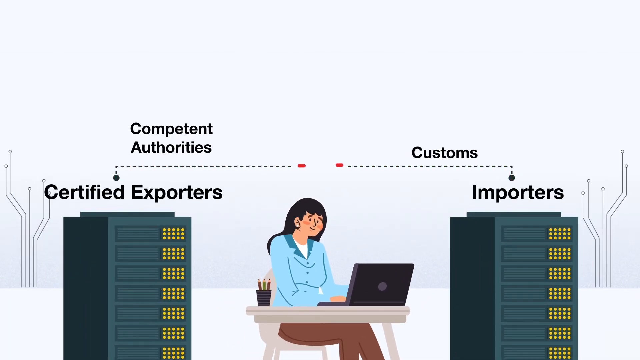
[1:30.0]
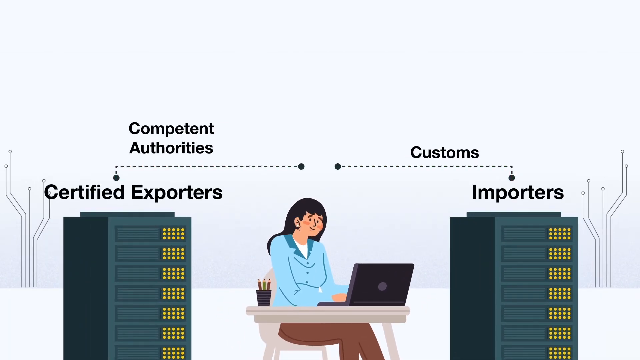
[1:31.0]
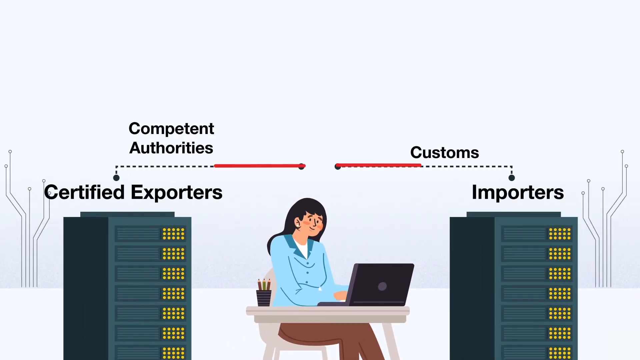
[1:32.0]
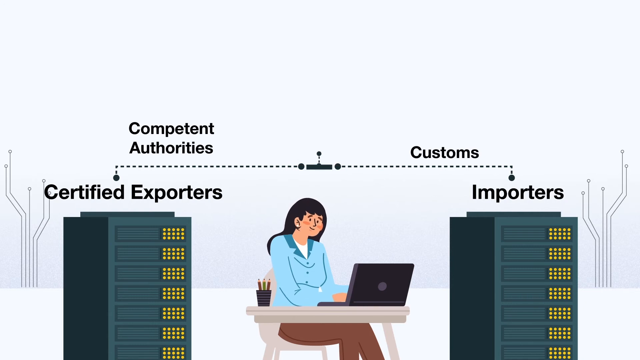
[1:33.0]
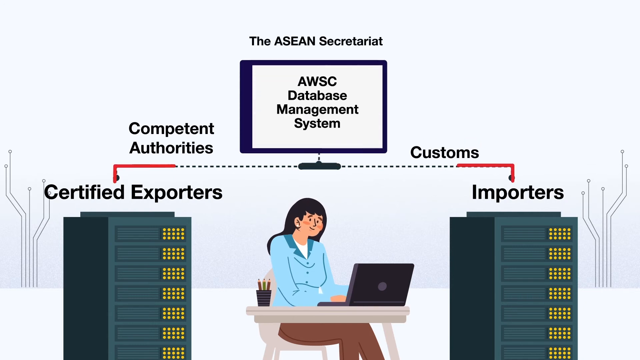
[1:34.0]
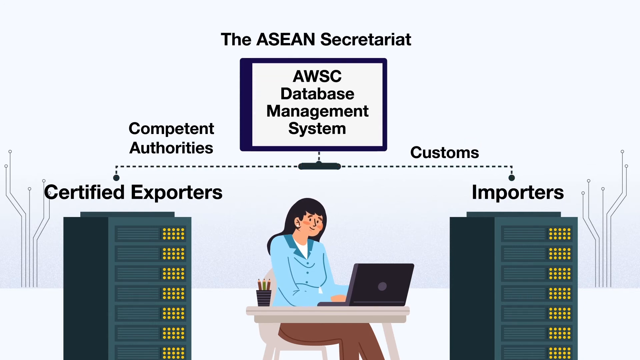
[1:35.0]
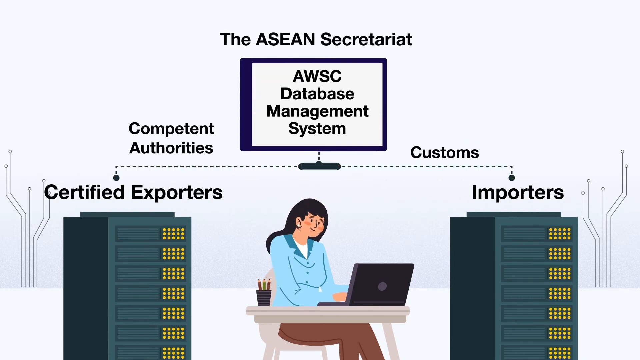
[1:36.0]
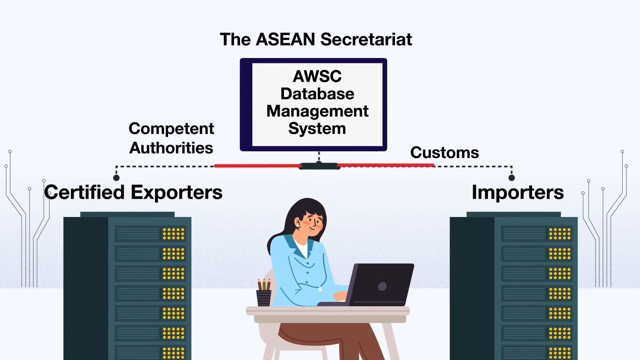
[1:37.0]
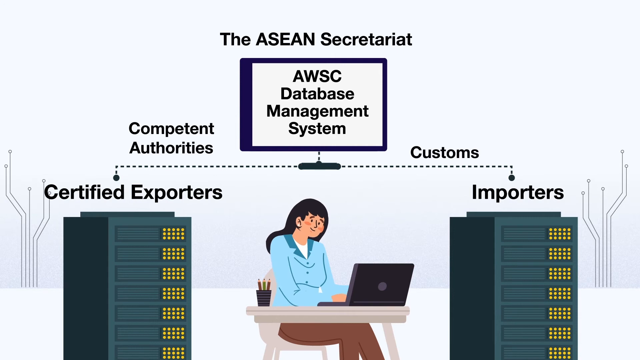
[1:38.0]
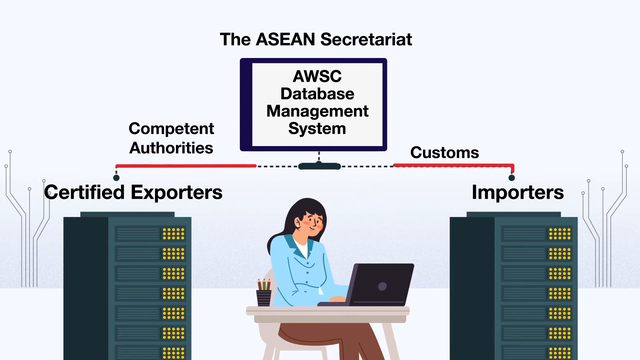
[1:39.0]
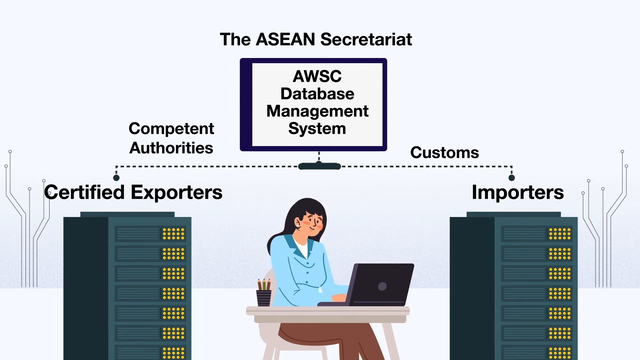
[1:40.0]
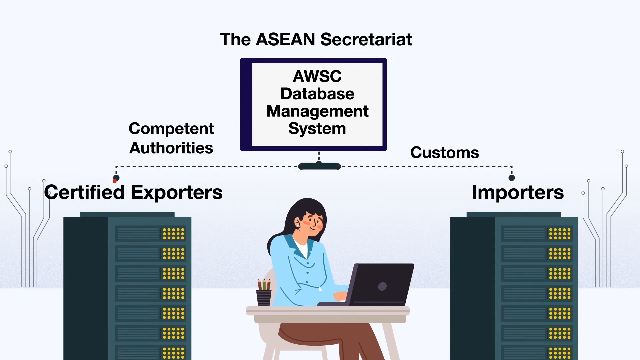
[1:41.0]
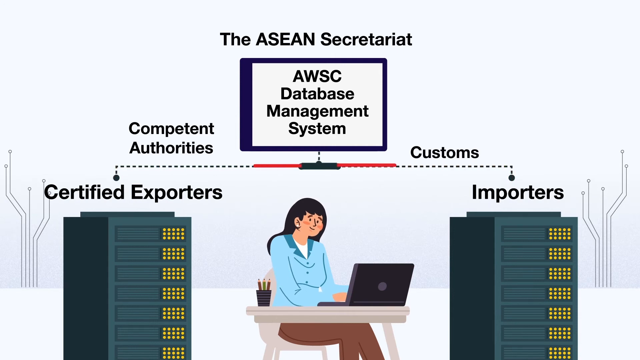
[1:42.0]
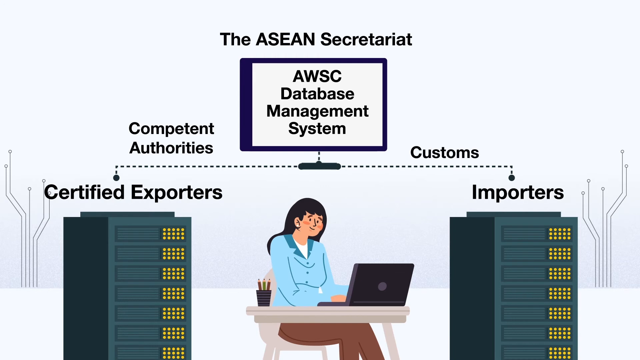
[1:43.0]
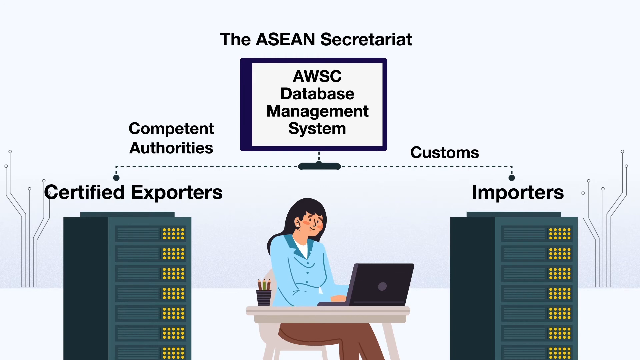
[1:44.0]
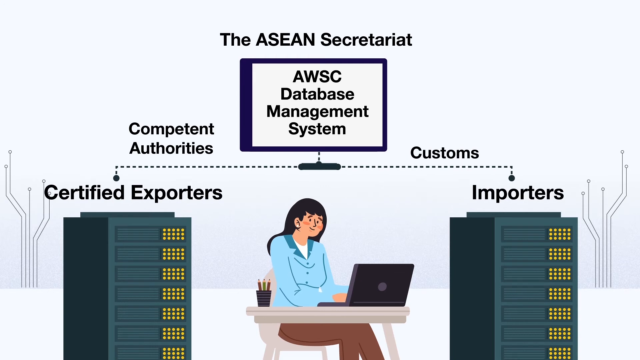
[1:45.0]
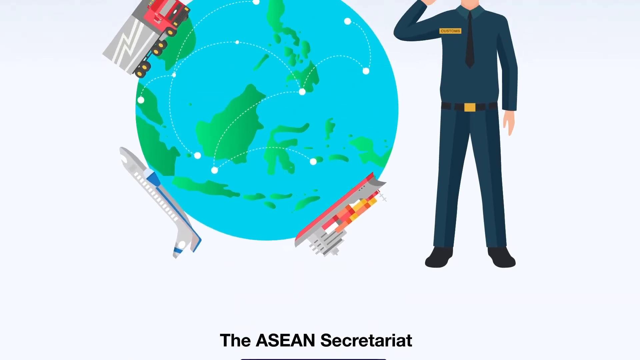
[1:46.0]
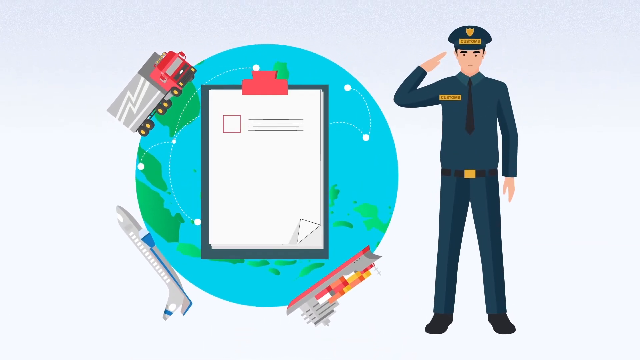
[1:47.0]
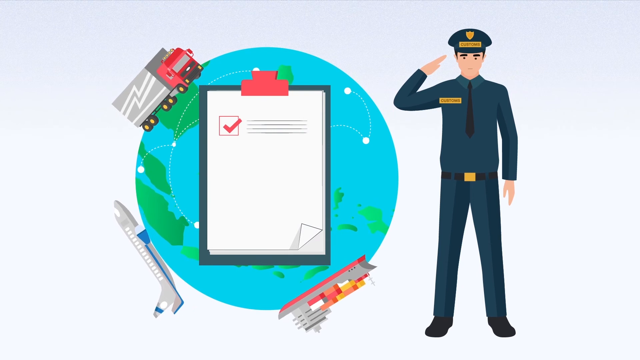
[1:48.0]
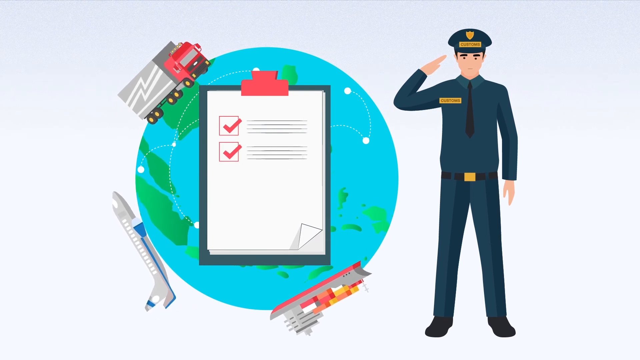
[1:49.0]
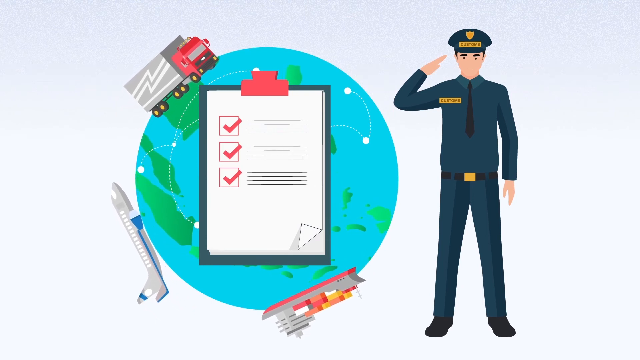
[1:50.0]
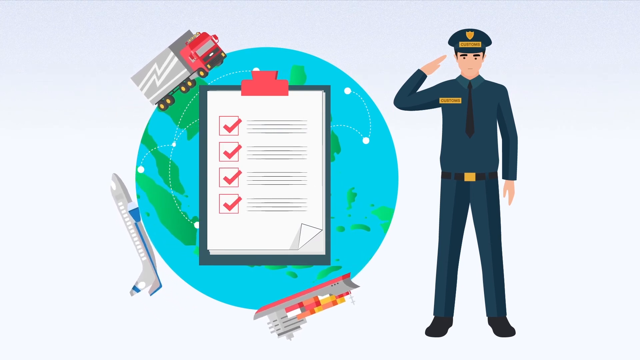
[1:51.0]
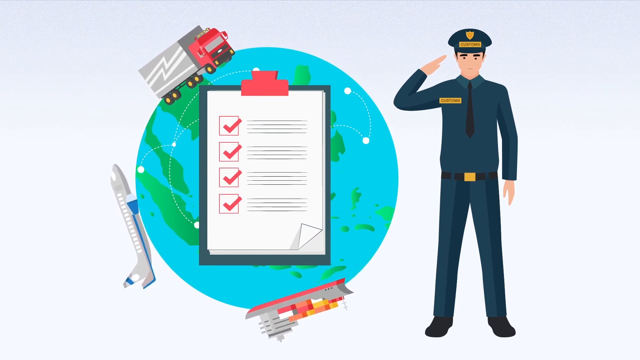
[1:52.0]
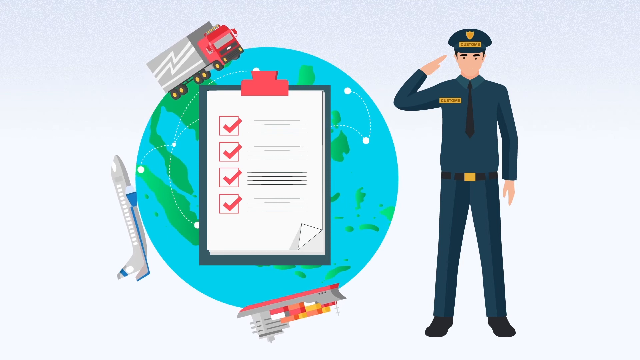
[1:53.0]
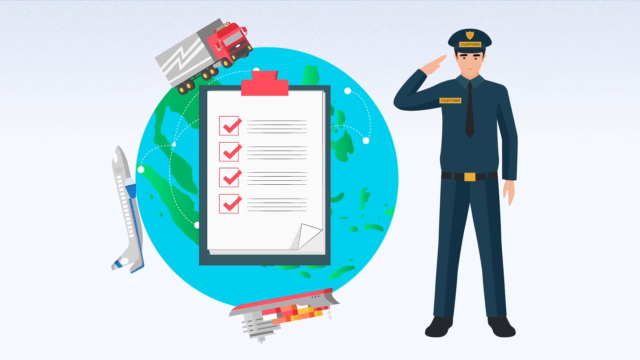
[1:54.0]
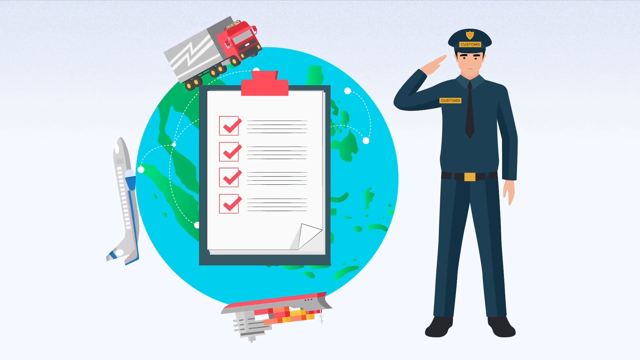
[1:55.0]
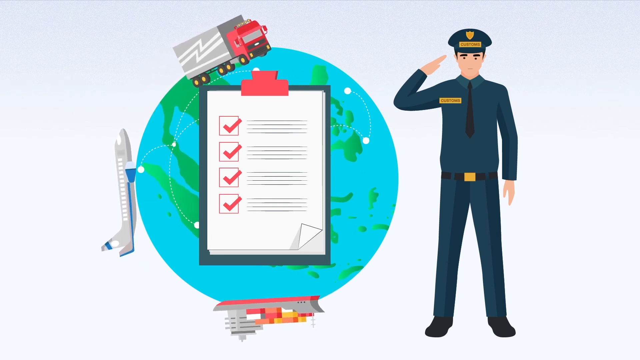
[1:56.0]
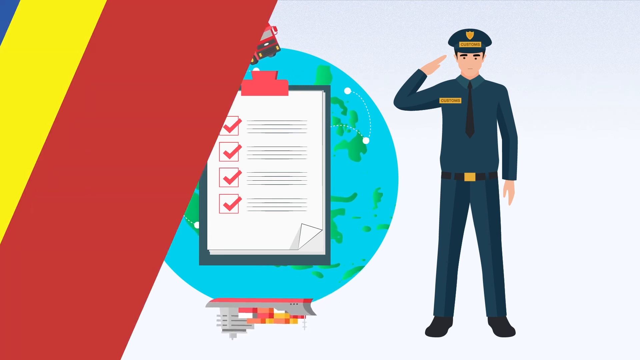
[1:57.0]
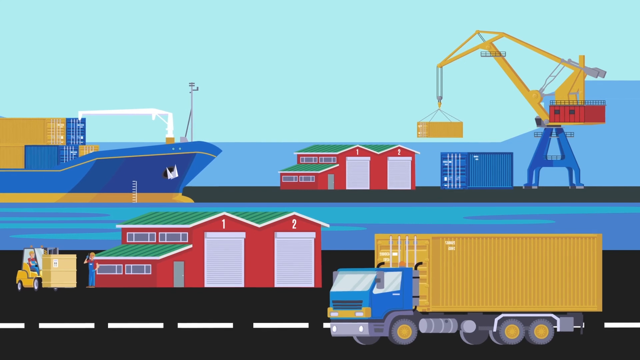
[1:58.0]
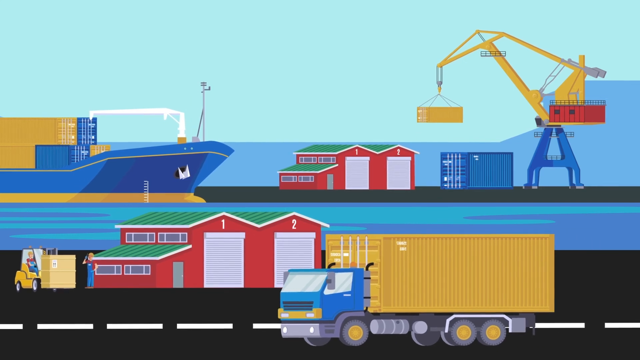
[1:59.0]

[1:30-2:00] A new scene shows what appear to be two servers, with a lady in a blue suit with long black hair in the middle, working on a laptop on a small table. Text appears above the servers: the left one says "Certified Exporters" and the right one "Importers". Above them, dotted lines connect to text reading "Competent Authorities" on the left and "Customs" on the right. Both lines join into a white box that says "AWSC Database Management System", with the main title "ASEAN Secretariat" above. The video then shows planet Earth with a cop on the right. A truck, a plane and a ship with several containers rotate around the planet. Another form appears in the center of the planet, with check boxes filled with green ticks.